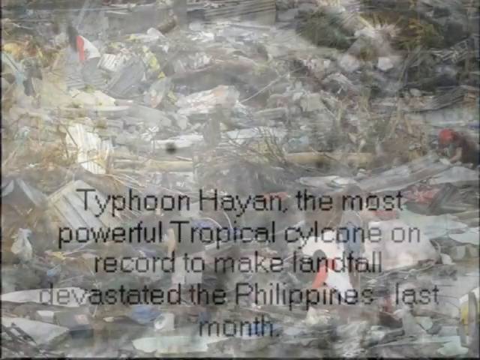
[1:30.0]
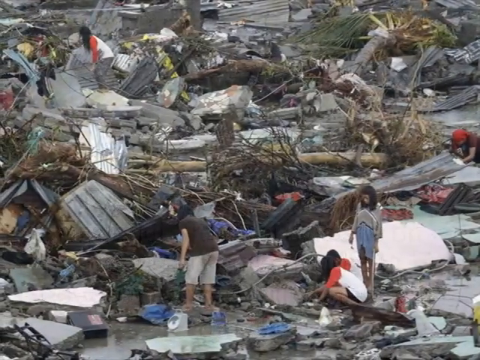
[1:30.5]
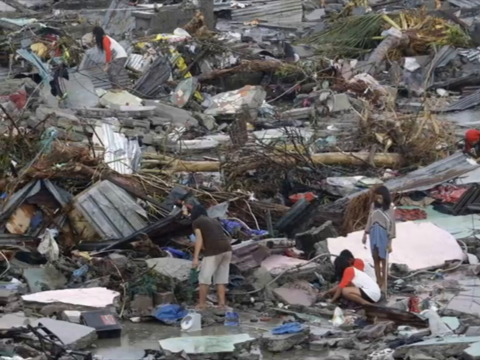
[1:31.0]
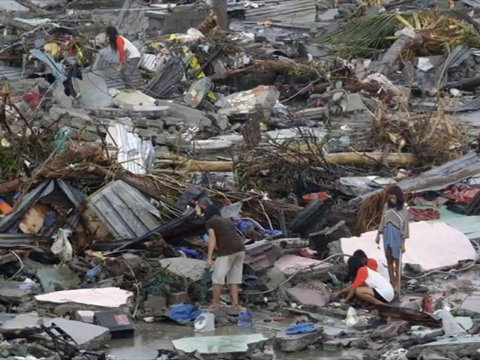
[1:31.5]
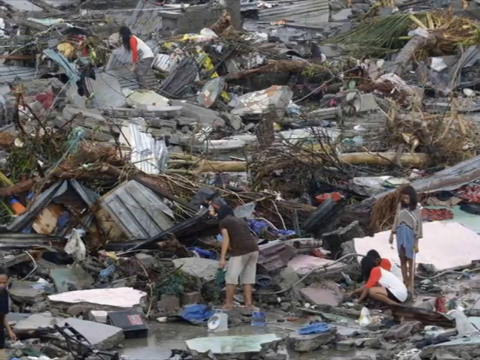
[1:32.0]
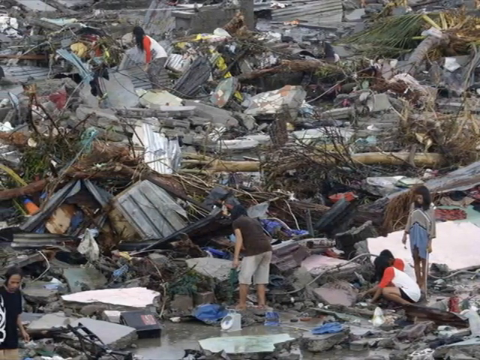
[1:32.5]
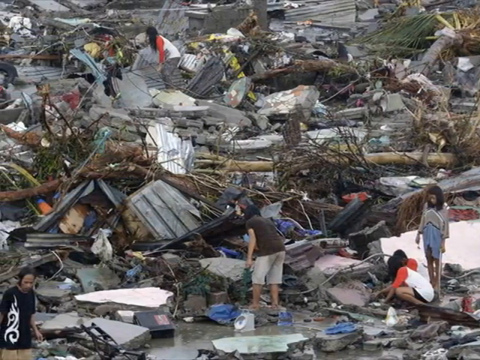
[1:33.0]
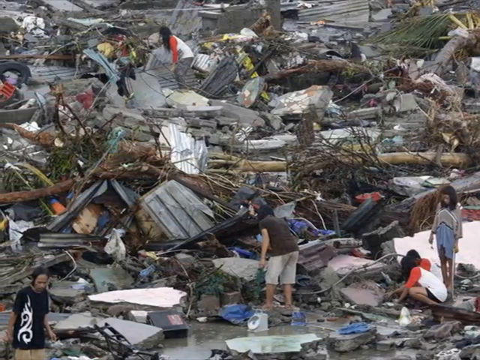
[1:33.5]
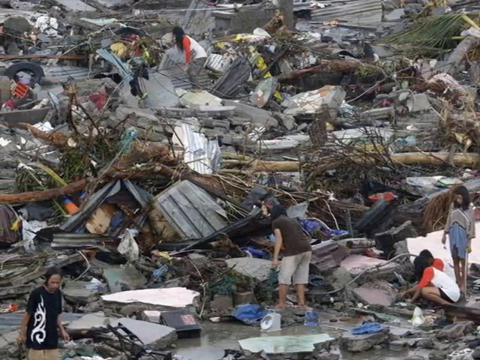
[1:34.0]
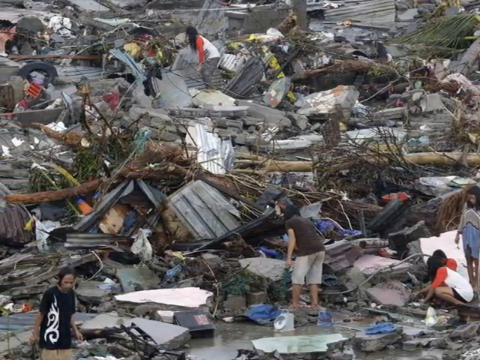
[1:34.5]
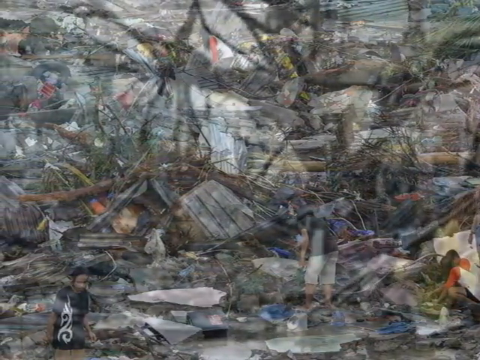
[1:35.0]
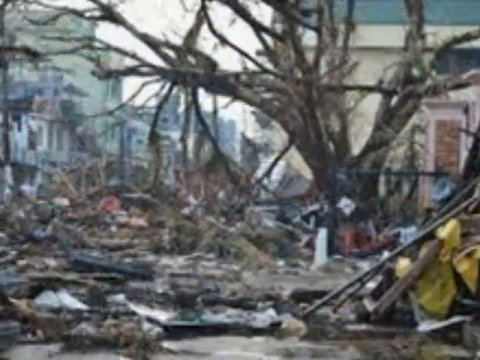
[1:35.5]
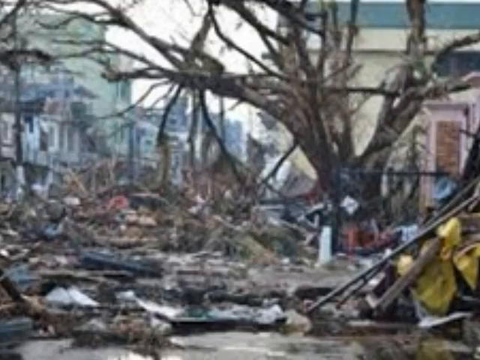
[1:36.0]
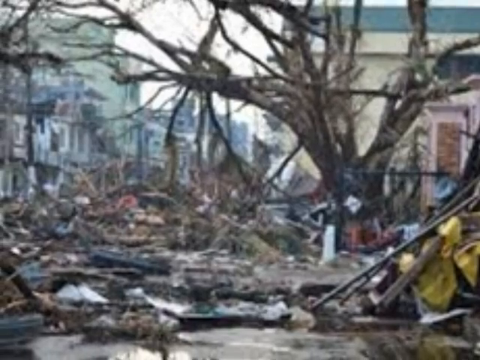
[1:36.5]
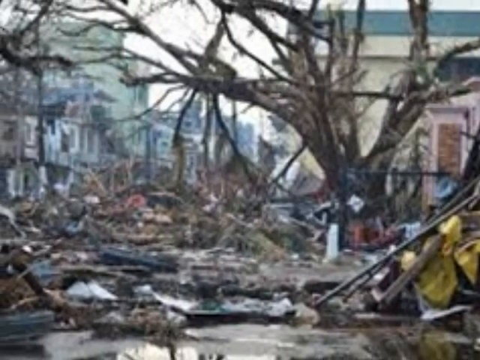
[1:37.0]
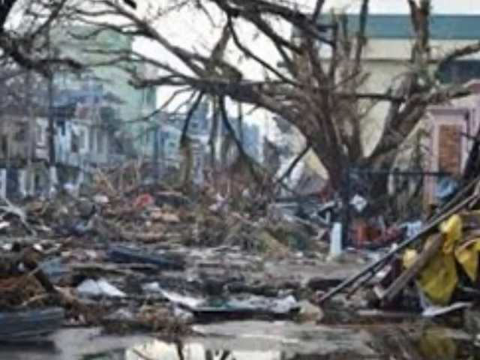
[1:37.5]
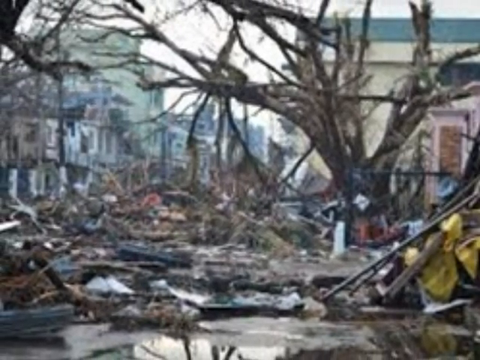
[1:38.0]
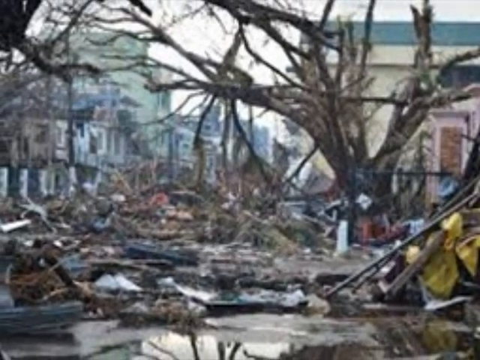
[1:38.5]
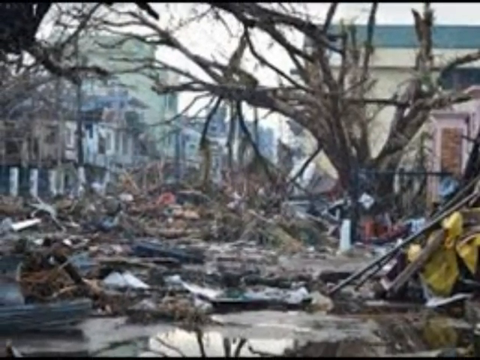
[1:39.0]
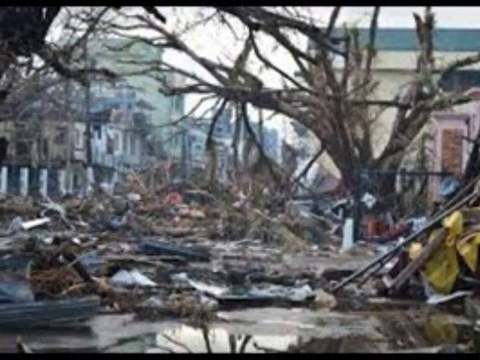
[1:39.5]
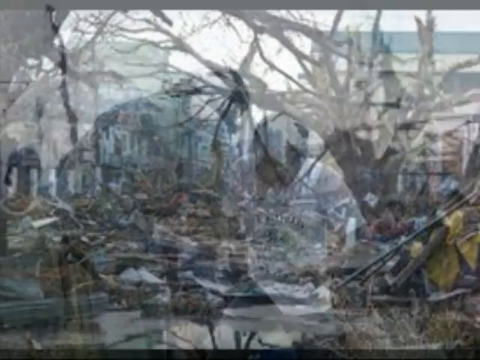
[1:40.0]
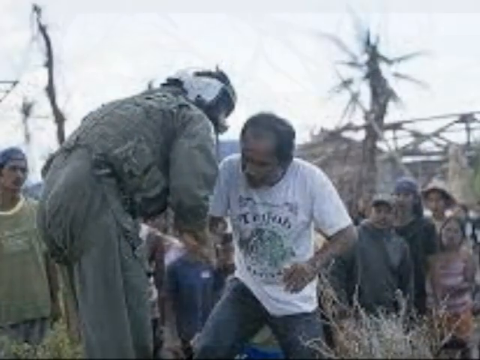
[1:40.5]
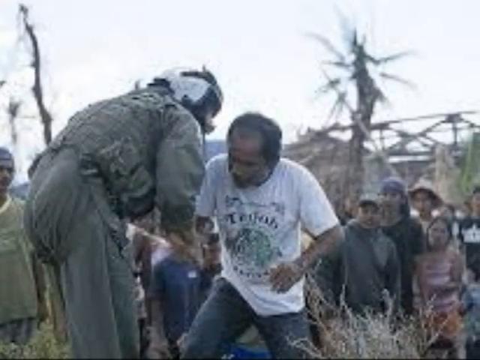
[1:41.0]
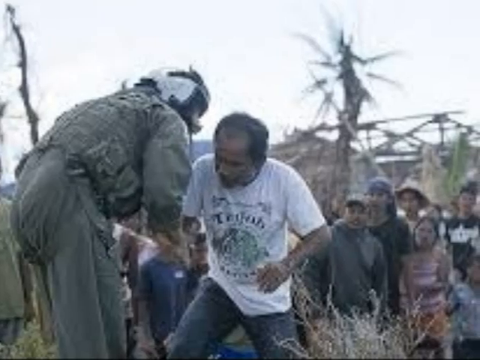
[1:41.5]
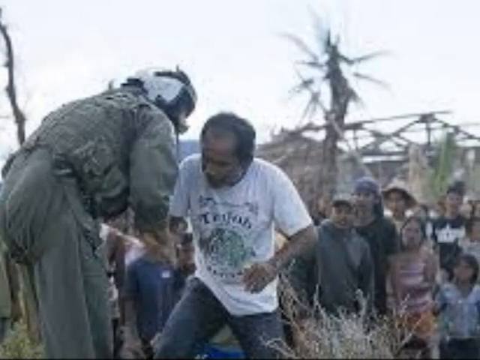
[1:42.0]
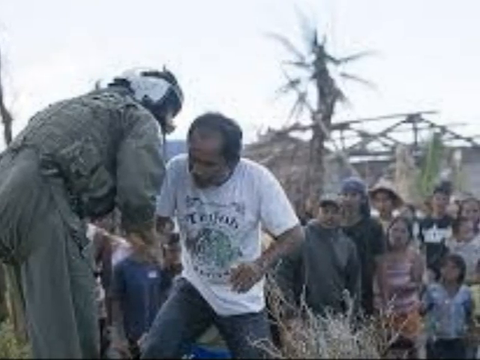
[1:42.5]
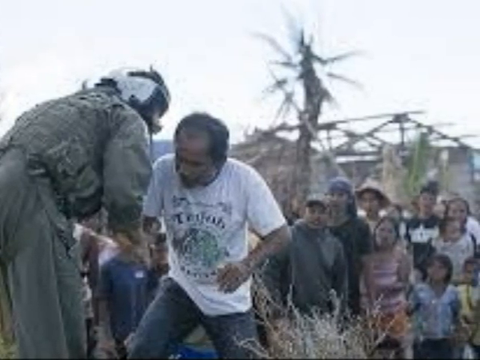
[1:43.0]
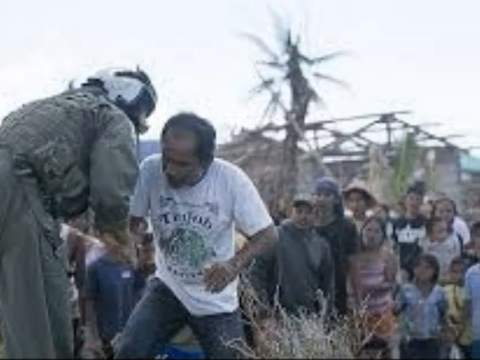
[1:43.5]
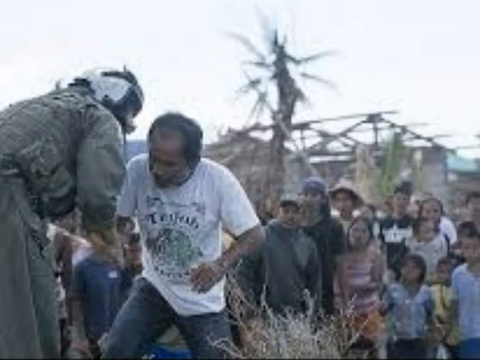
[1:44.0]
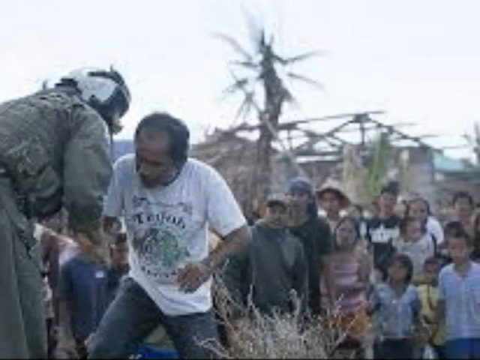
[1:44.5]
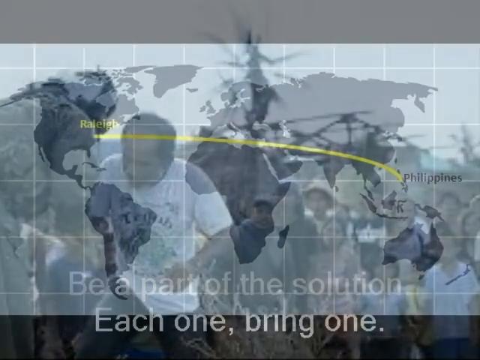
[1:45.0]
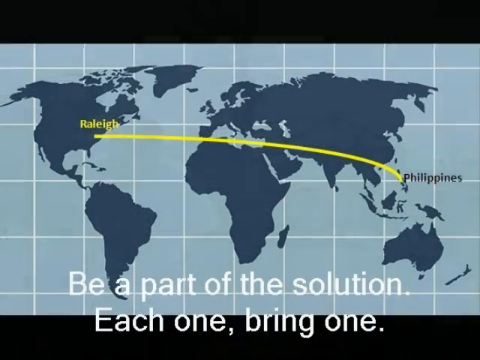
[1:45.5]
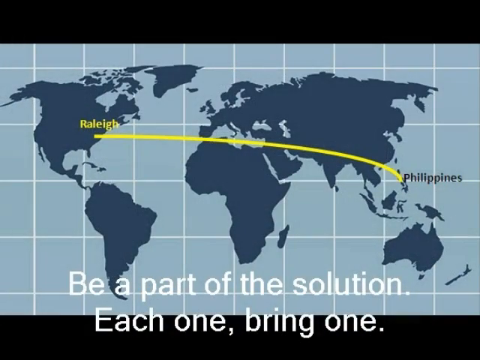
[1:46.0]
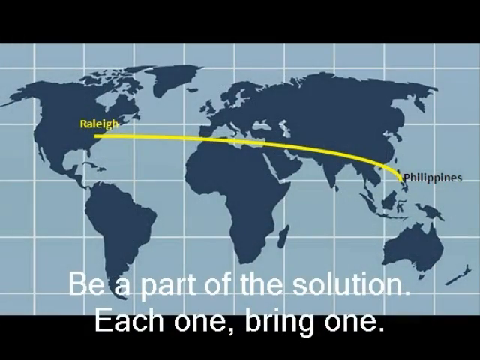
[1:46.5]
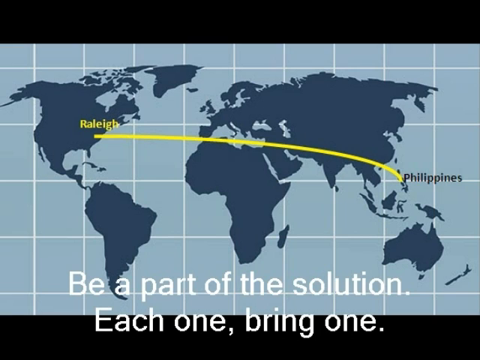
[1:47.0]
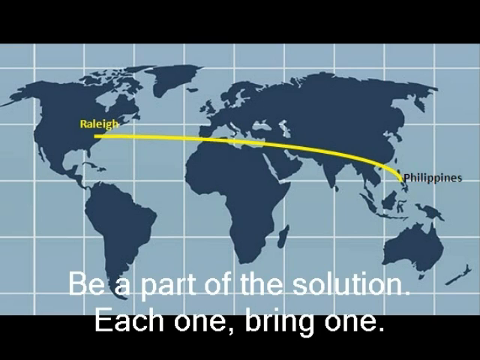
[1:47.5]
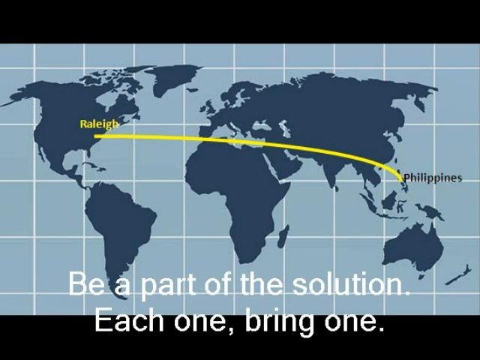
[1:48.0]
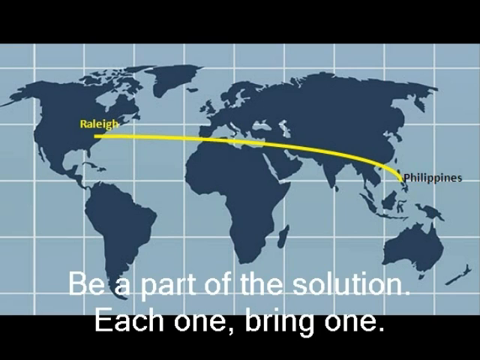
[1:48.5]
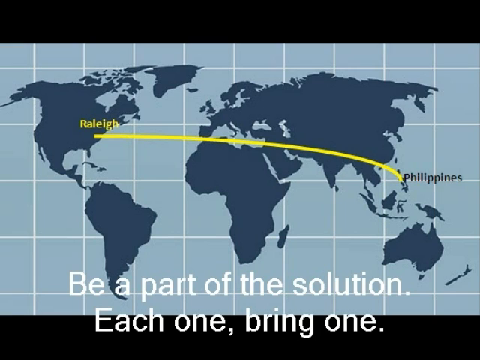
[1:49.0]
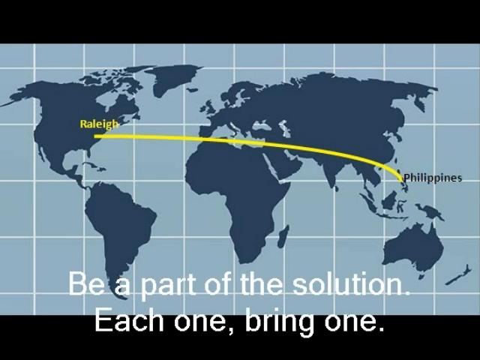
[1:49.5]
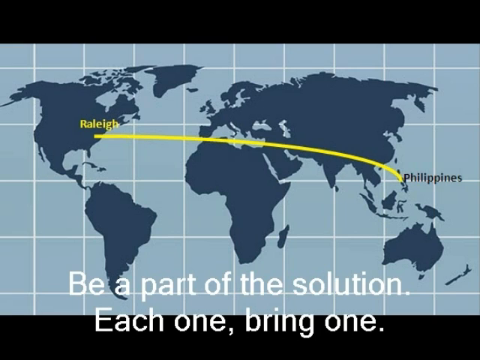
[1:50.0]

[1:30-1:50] A view of destruction shows a large rubble pile filled with debris, including concrete, branches, timber, metal siding, wires and various other plastic objects. Five people are rummaging around the pile, three at its base and two on top. Several of them appear to be trying to pluck items from the debris and rubble and sift through it. The camera pans across the rubble, showing the extent of the damage. The video then transitions to another scene of destroyed buildings and badly damaged trees with broken limbs. Next, a group of about eight people stand around trying to help with recovery efforts, with damaged trees and buildings visible in the background. Finally, a map of the world shows a yellow line from Raleigh, North America, to the Philippines, with the words "Be a Part of the Solution, Each One Bring One" at the bottom.